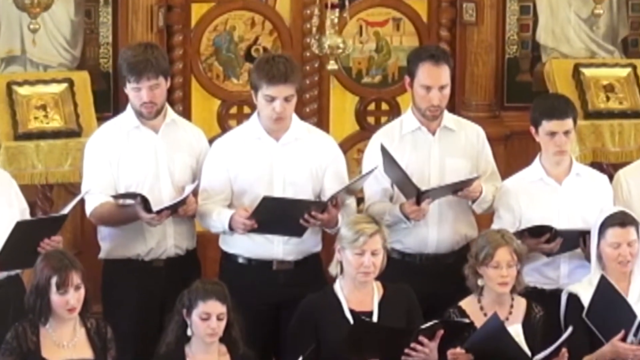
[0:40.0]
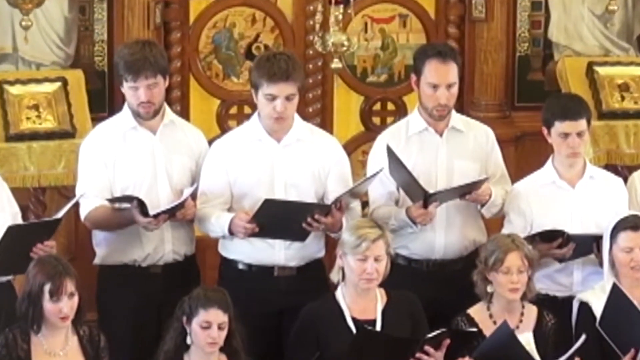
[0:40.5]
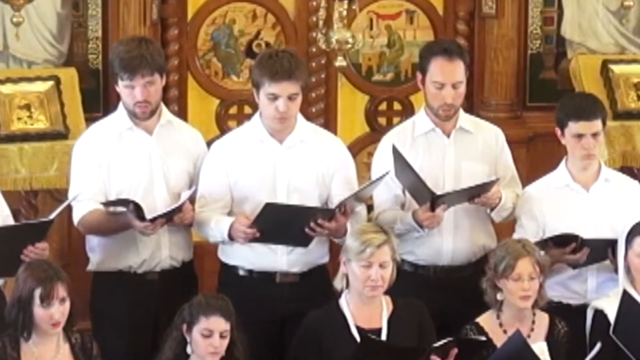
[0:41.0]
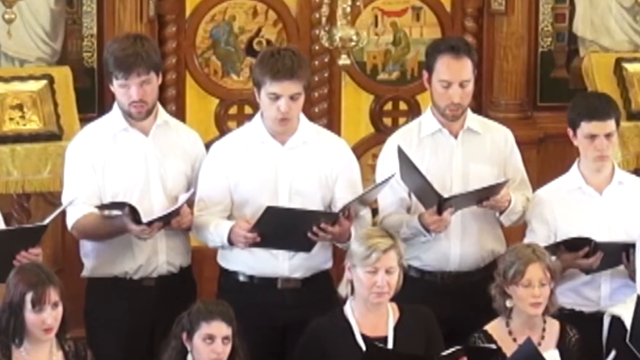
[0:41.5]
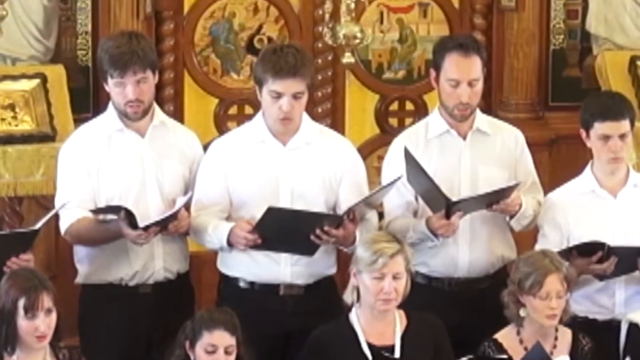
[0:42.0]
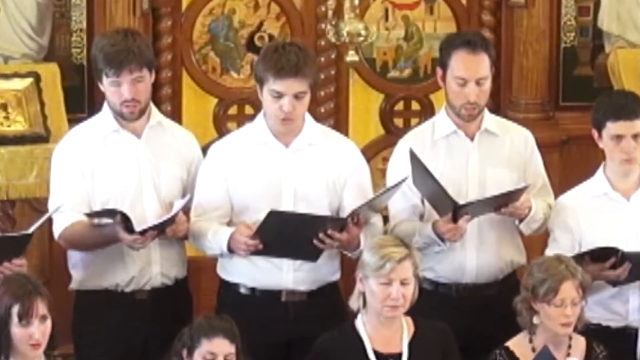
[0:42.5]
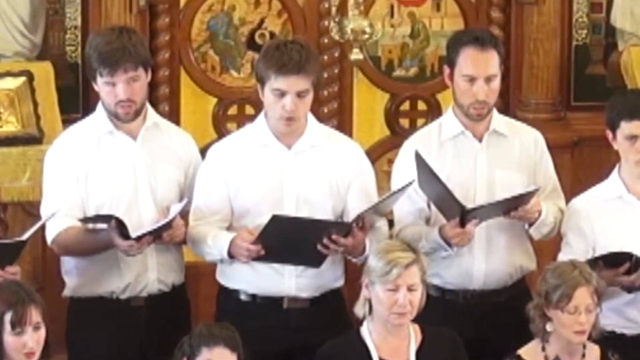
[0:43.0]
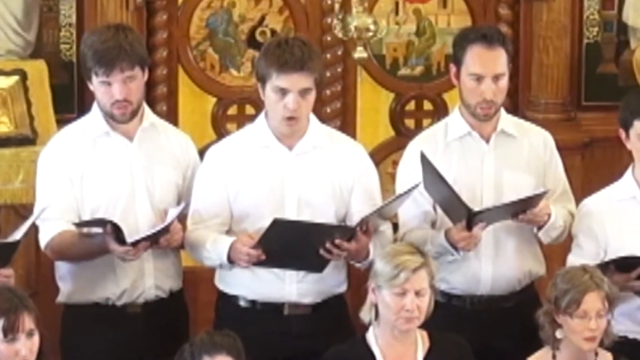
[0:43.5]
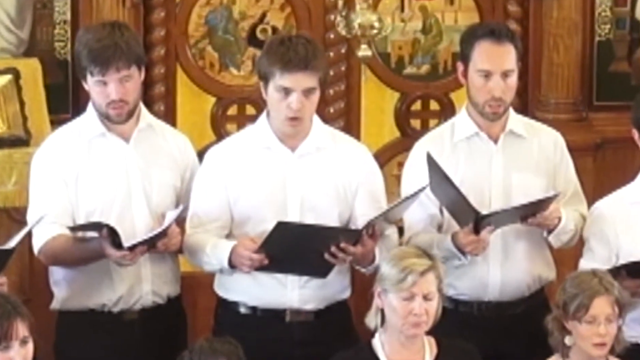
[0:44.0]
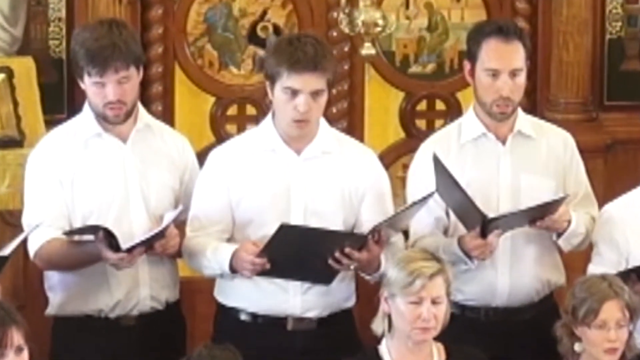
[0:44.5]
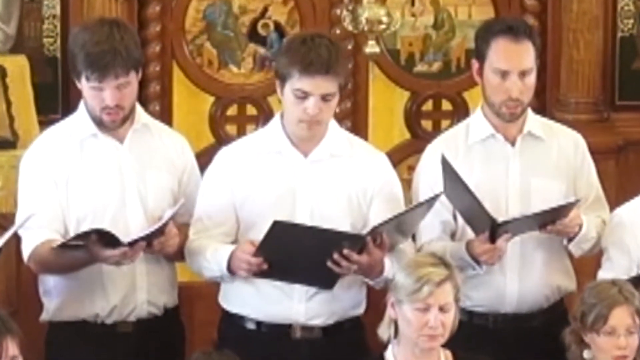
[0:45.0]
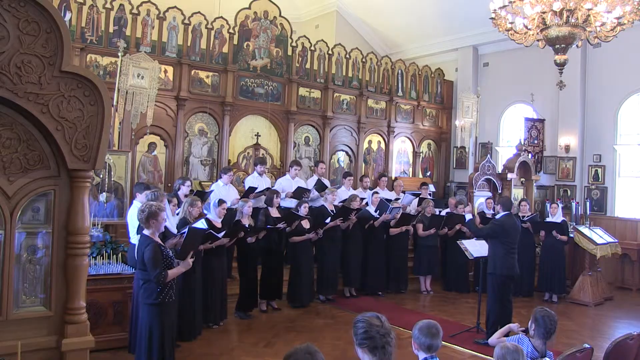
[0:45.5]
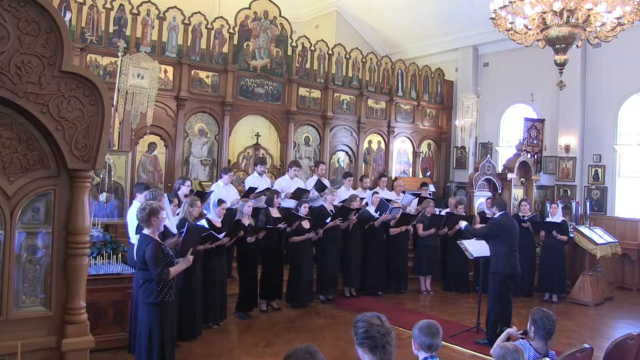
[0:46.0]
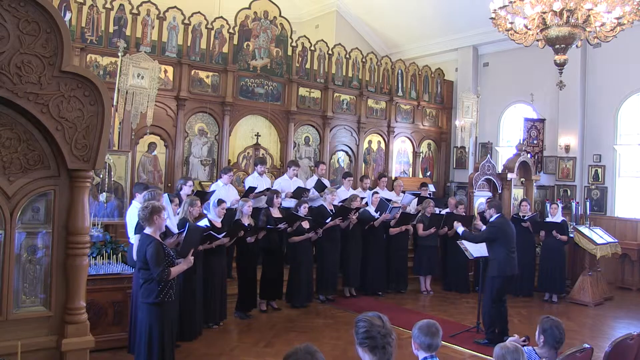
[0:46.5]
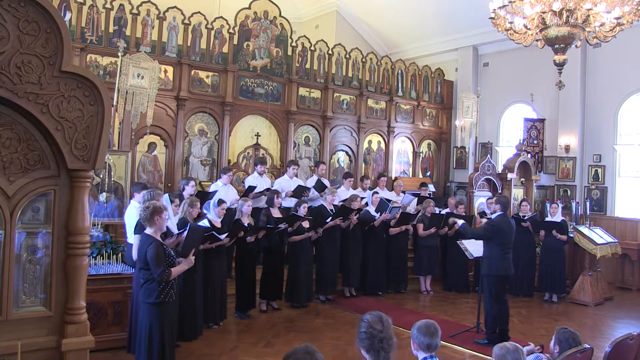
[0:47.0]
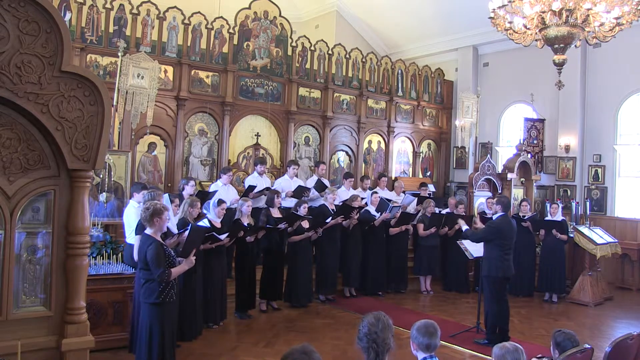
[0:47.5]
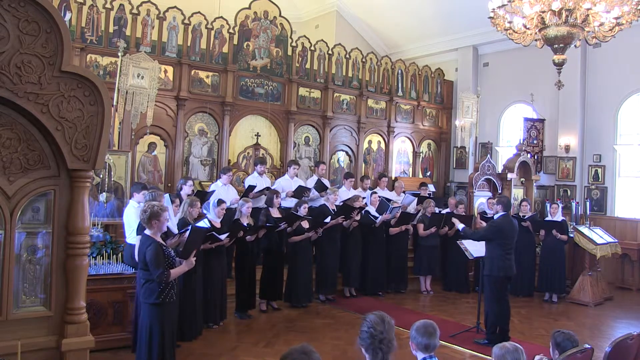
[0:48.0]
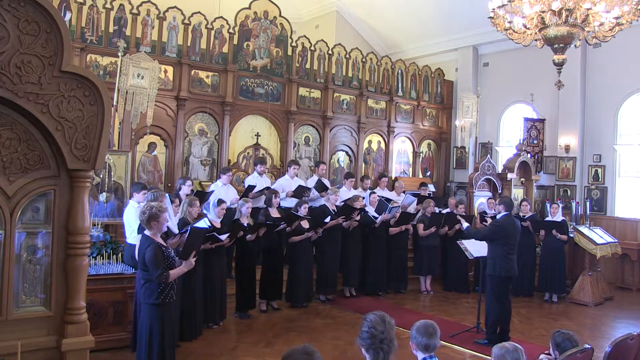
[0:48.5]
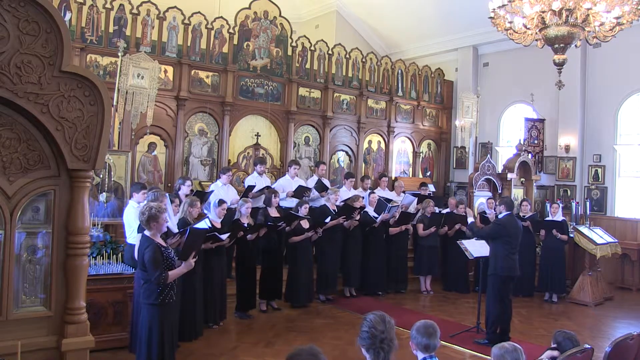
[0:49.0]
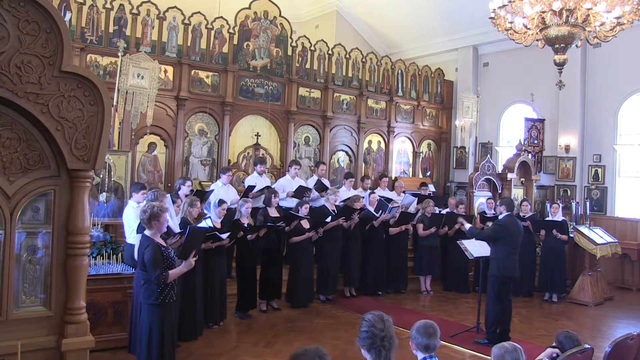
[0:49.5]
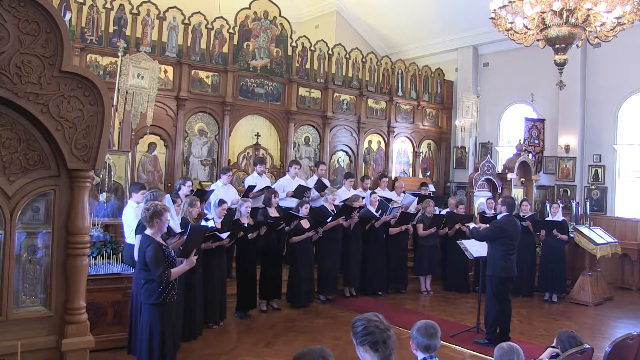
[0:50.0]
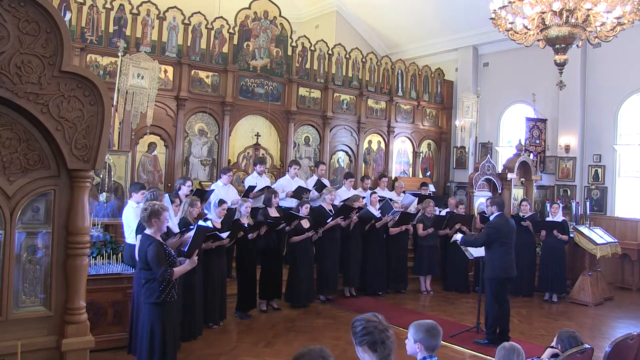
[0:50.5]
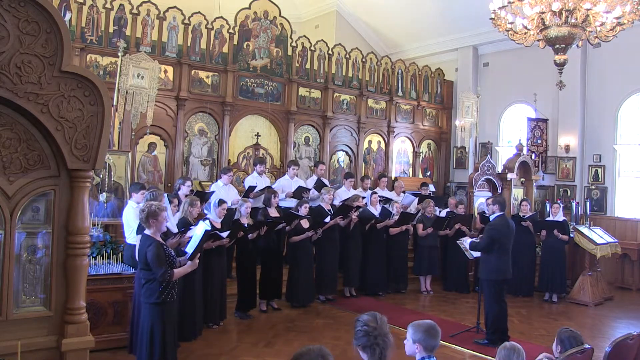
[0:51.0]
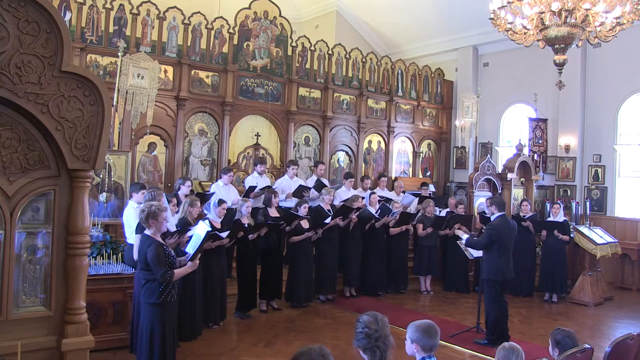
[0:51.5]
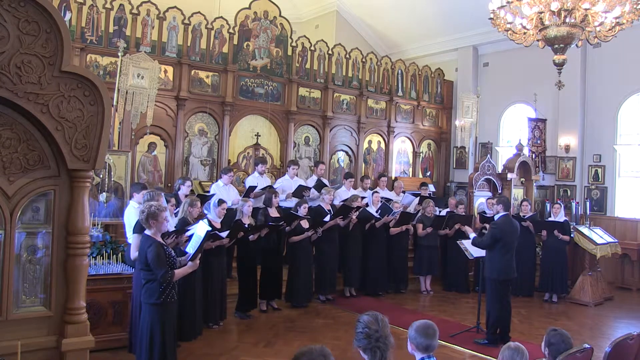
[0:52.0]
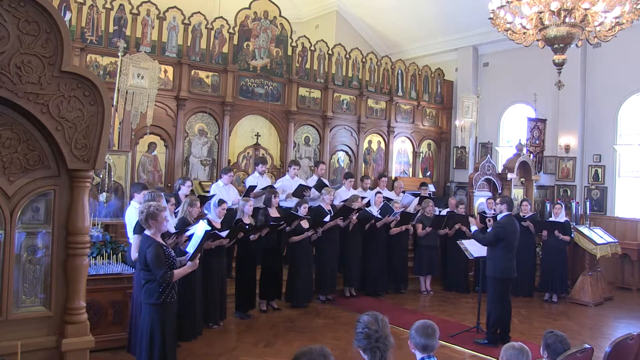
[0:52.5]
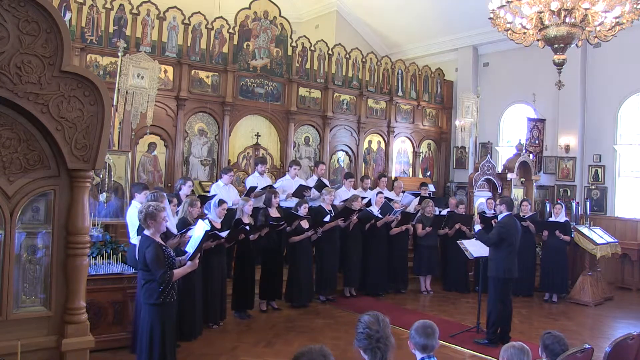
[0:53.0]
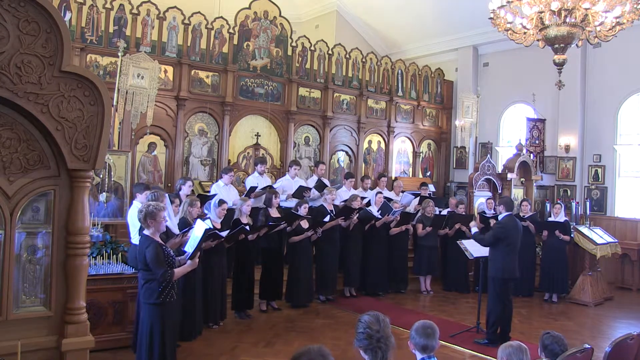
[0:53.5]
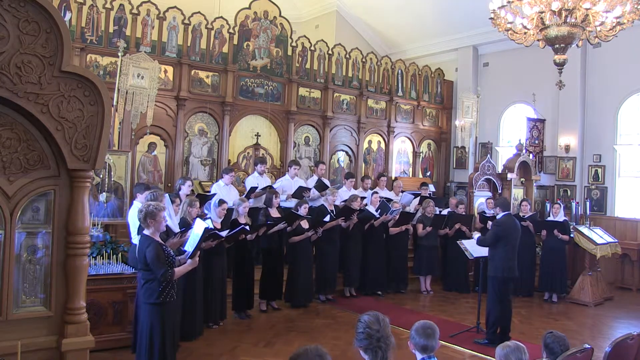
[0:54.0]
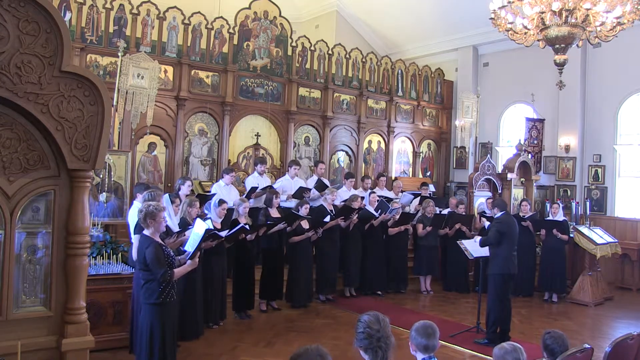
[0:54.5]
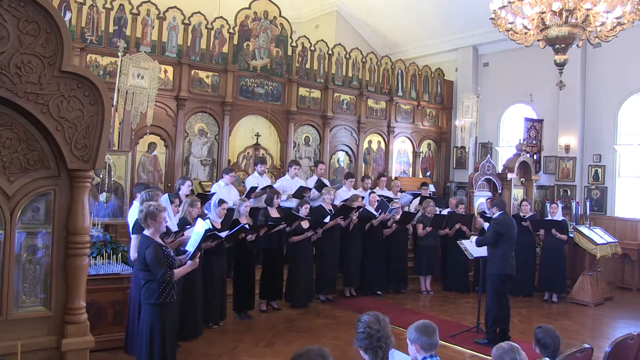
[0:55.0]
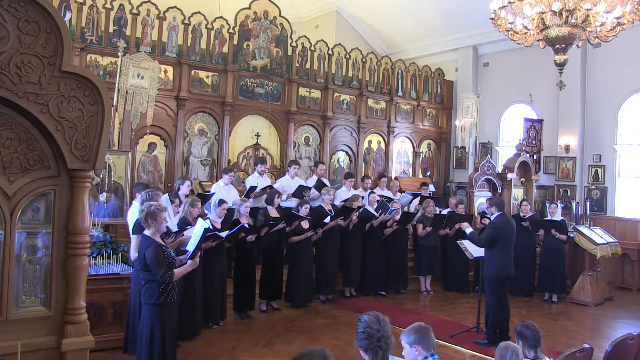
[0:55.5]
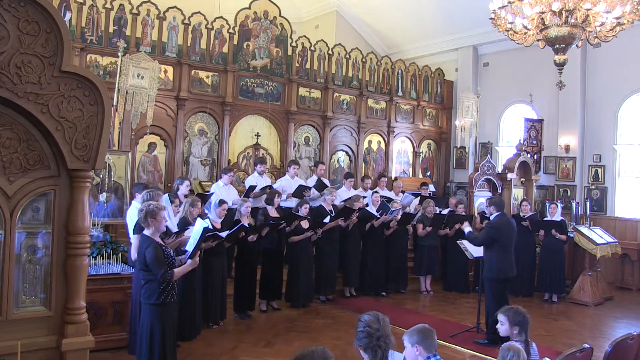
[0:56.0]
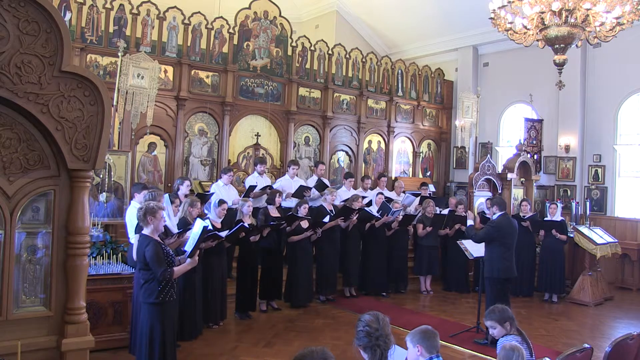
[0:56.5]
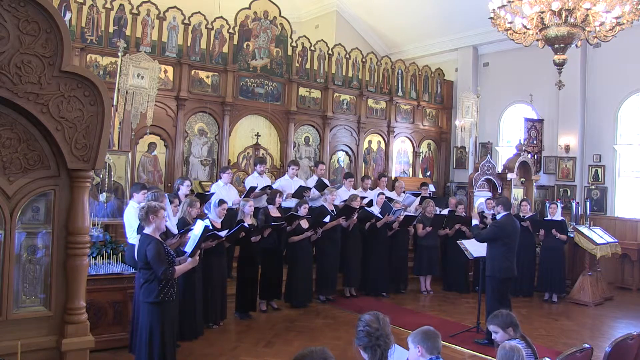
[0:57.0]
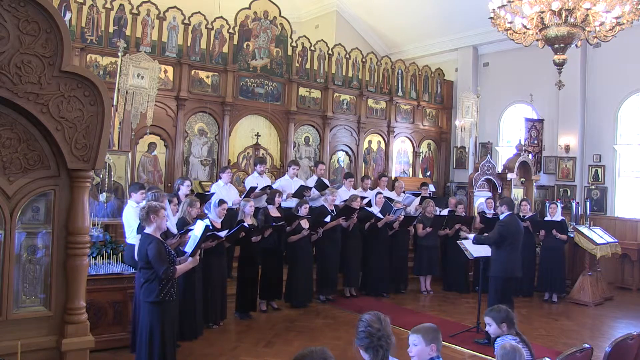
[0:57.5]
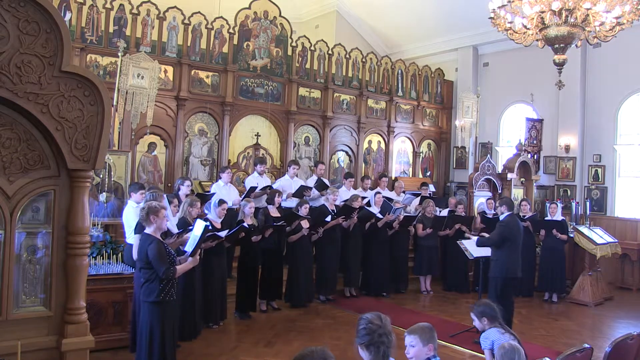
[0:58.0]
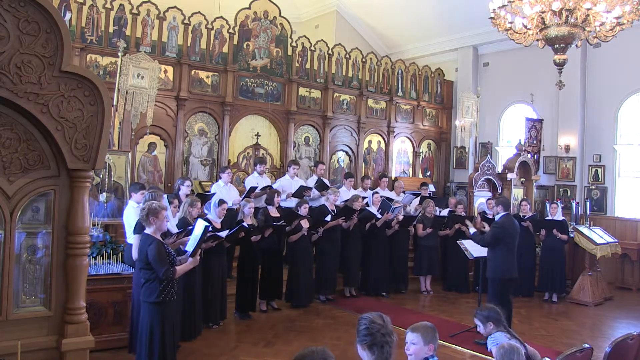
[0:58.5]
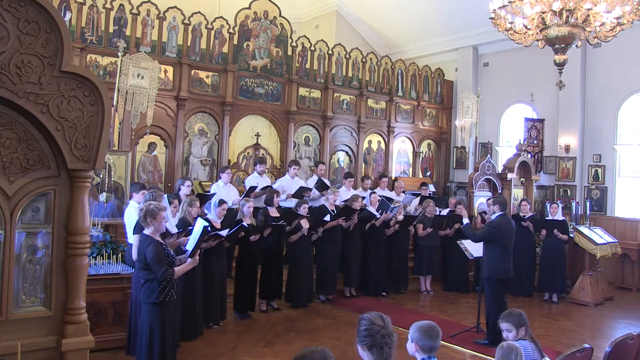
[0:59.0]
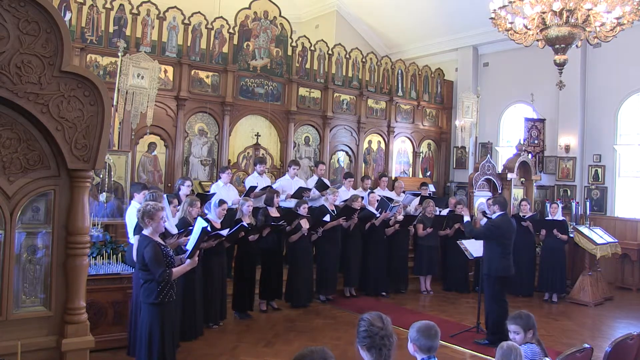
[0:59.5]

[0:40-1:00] The camera continues to zoom in on the three singing men, then changes to a zoomed-out position showing all the members of the choir. The women, all dressed in black, are in the first row. The men are on an upper level, what looks like higher ground, though the area they stand on is hidden because the women block it. The men all wear white shirts. The conductor makes hand gestures to control the flow of the music. The seated audience watching the performance is slightly visible in the bottom right area of the frame. The giant chandelier hanging from the ceiling is in the top right corner, and behind the choir there are many different religious decorations, what look like murals.